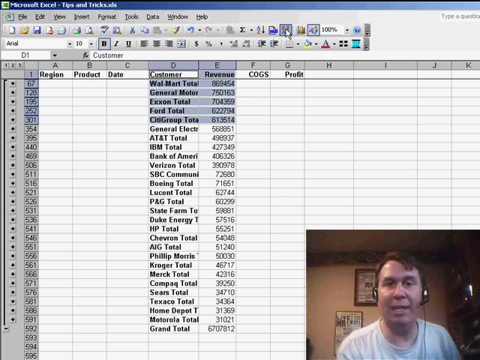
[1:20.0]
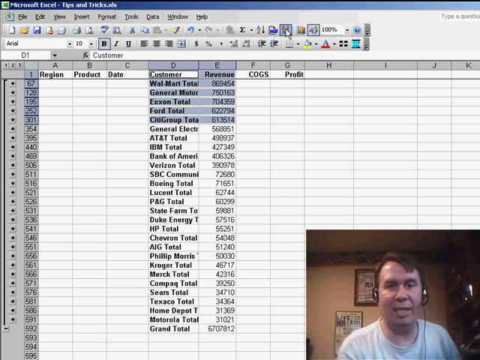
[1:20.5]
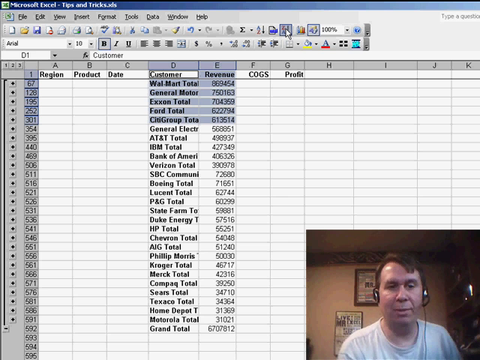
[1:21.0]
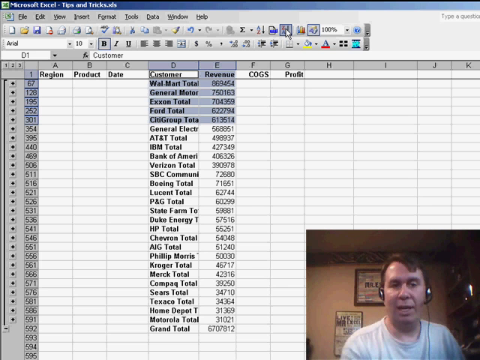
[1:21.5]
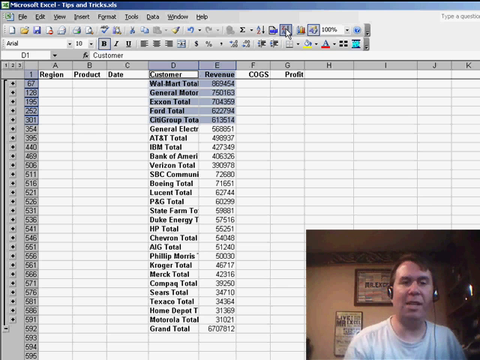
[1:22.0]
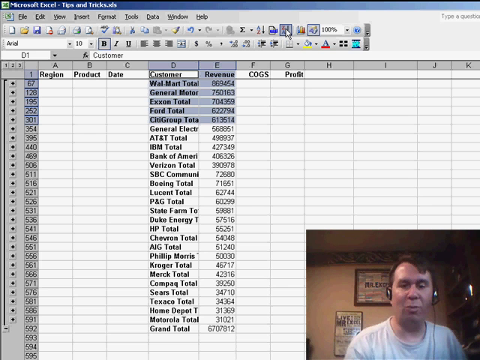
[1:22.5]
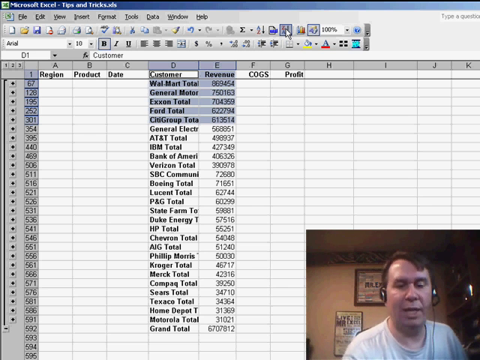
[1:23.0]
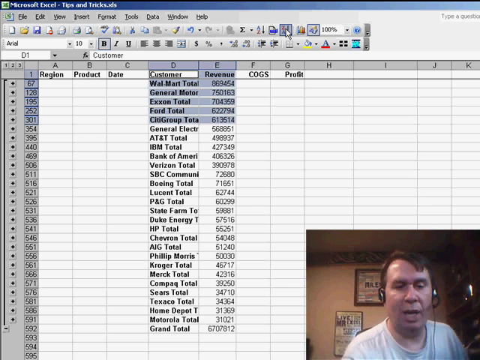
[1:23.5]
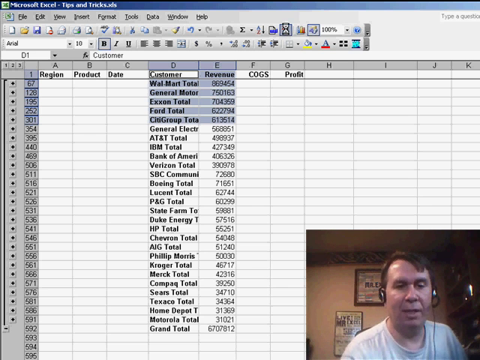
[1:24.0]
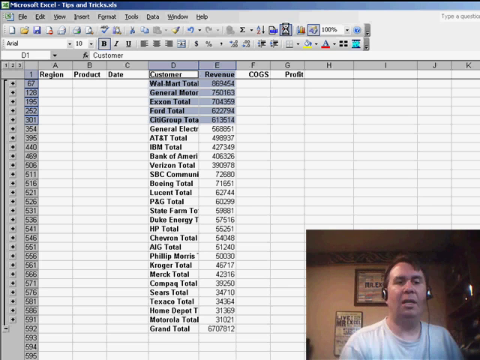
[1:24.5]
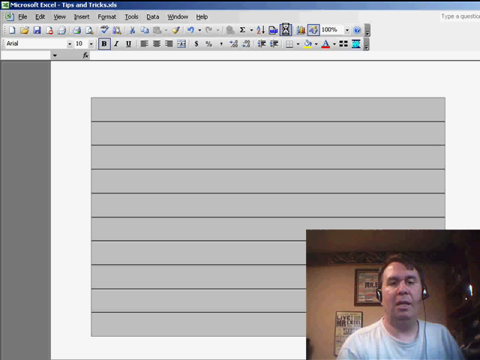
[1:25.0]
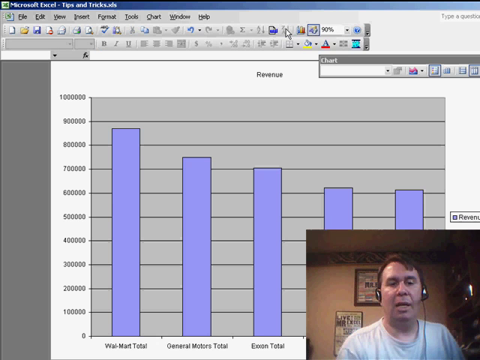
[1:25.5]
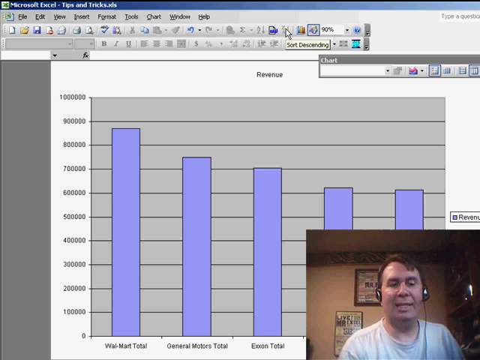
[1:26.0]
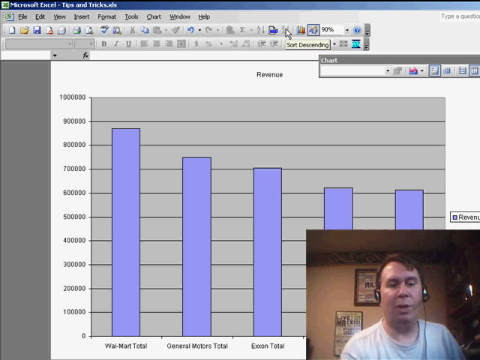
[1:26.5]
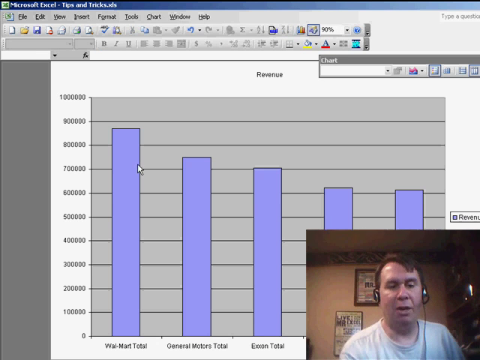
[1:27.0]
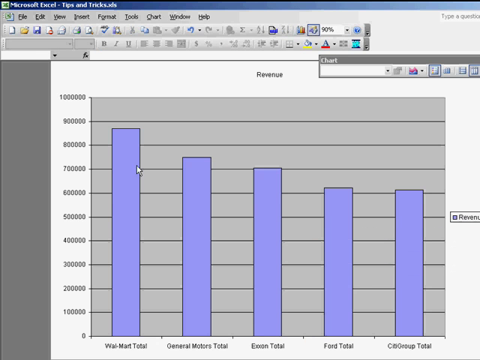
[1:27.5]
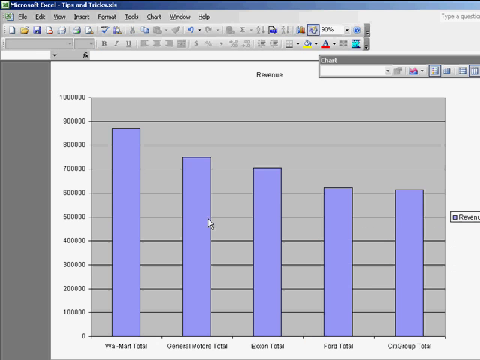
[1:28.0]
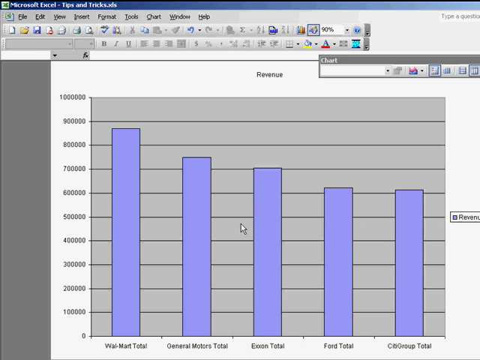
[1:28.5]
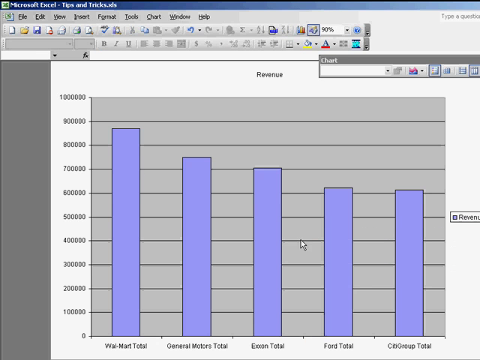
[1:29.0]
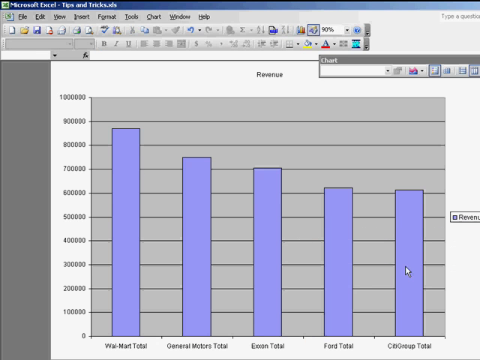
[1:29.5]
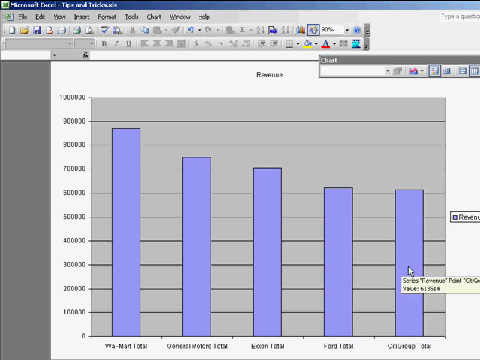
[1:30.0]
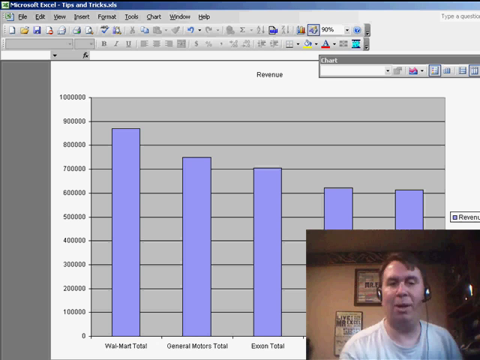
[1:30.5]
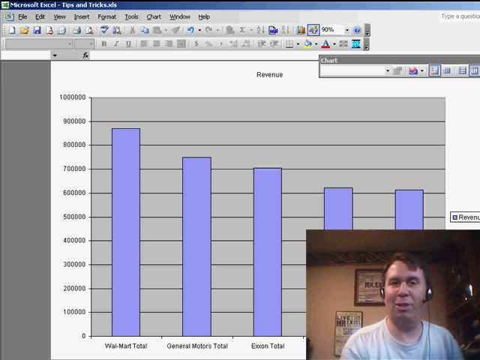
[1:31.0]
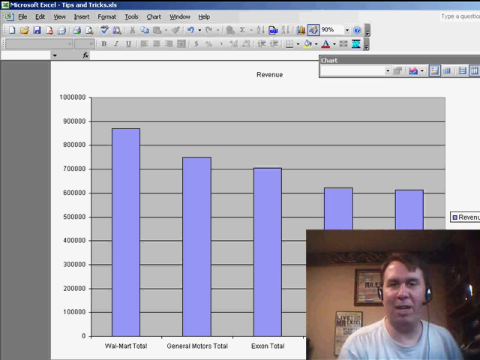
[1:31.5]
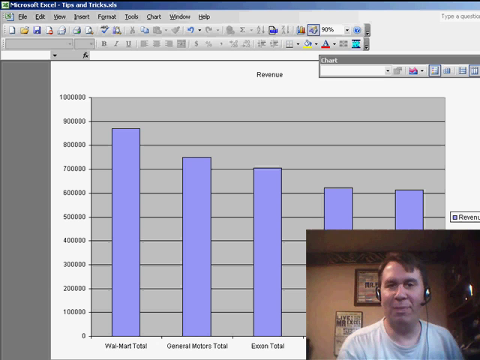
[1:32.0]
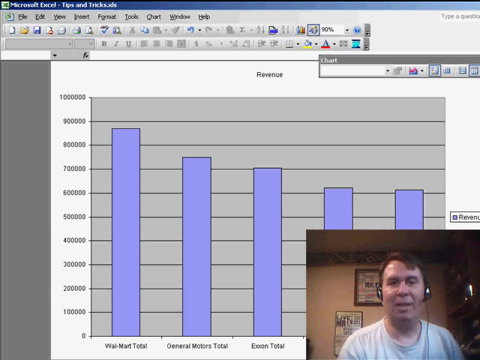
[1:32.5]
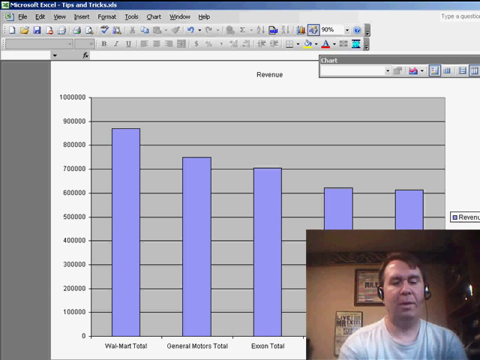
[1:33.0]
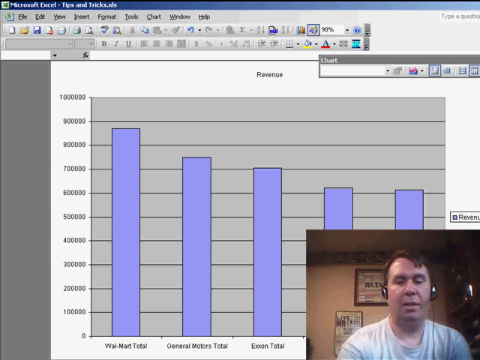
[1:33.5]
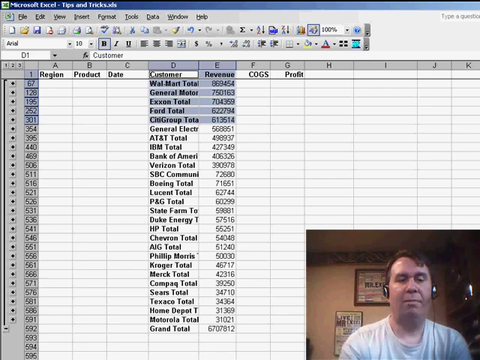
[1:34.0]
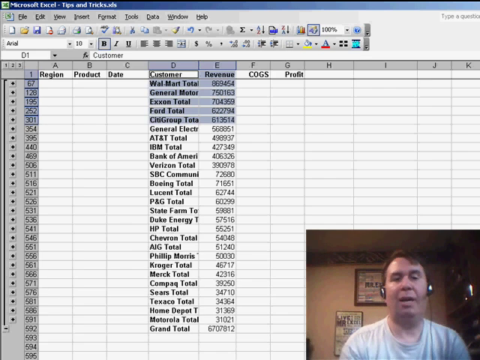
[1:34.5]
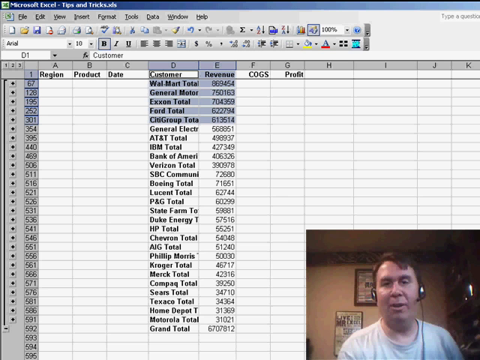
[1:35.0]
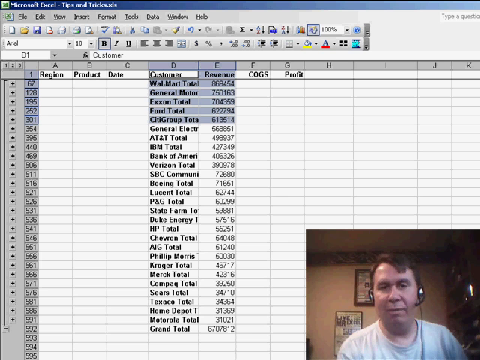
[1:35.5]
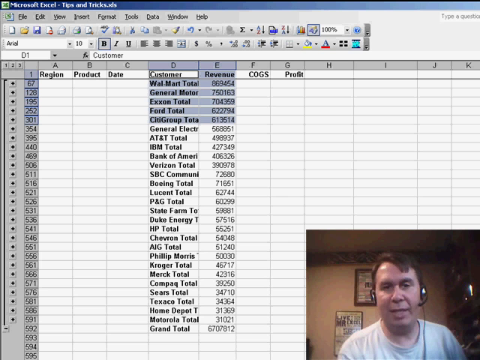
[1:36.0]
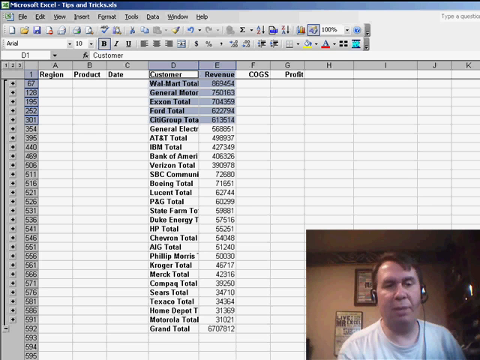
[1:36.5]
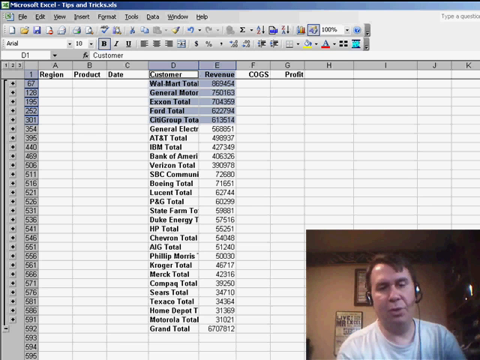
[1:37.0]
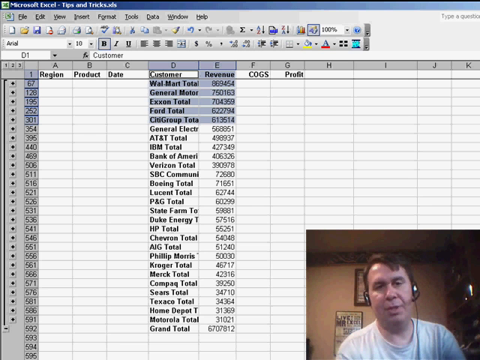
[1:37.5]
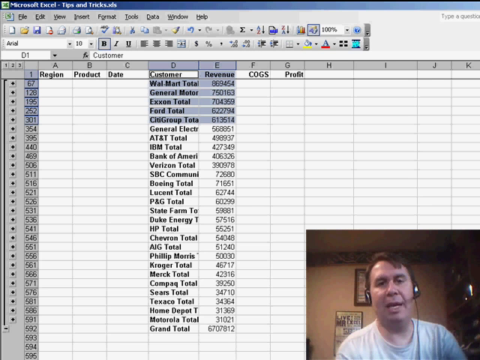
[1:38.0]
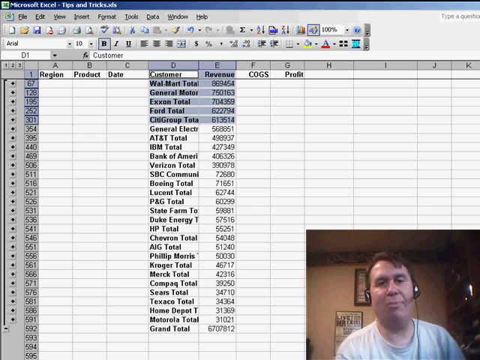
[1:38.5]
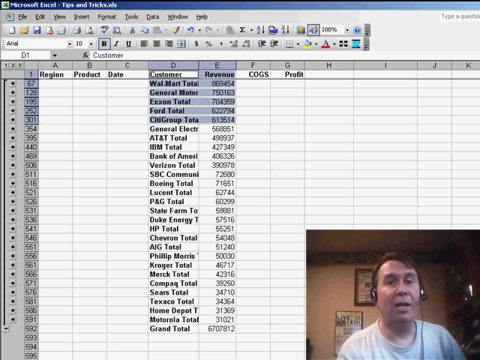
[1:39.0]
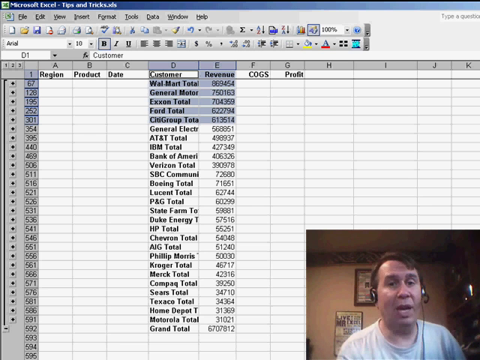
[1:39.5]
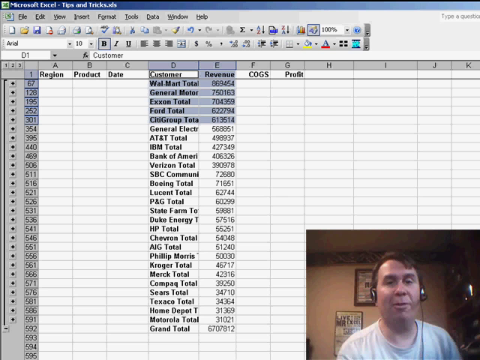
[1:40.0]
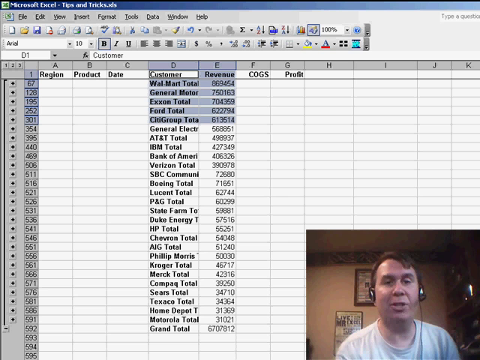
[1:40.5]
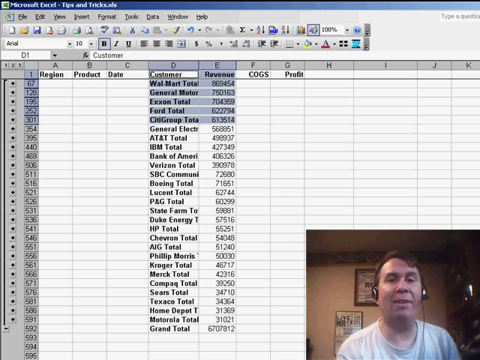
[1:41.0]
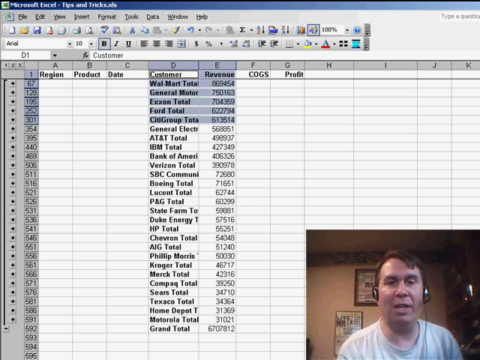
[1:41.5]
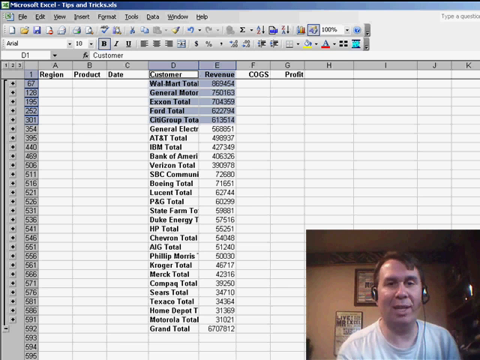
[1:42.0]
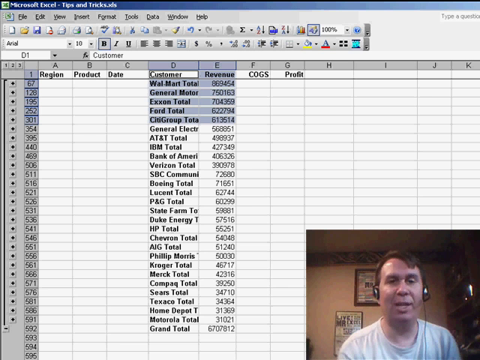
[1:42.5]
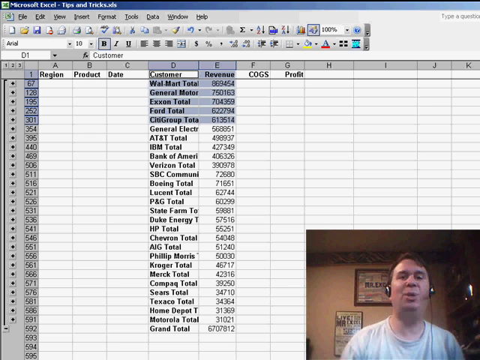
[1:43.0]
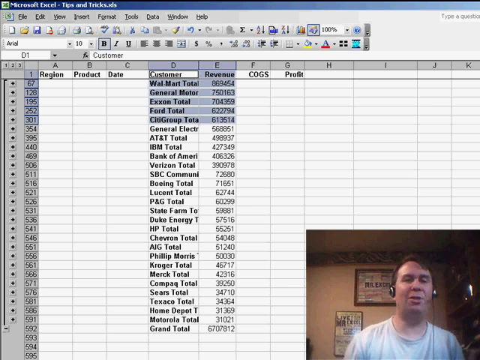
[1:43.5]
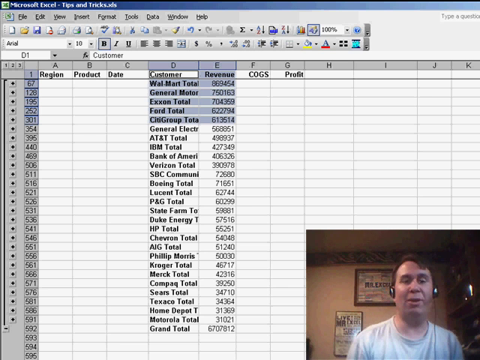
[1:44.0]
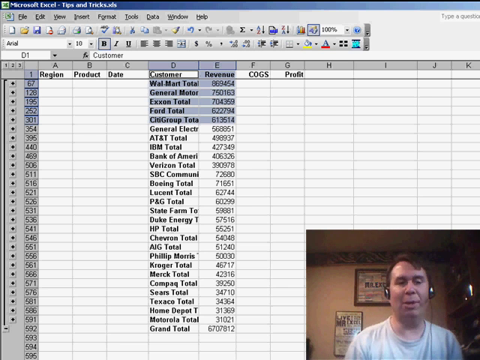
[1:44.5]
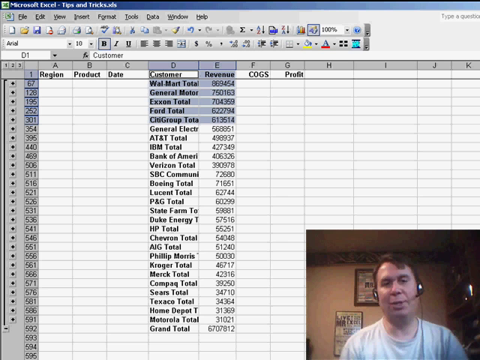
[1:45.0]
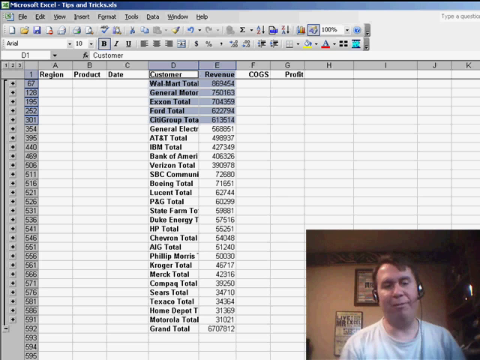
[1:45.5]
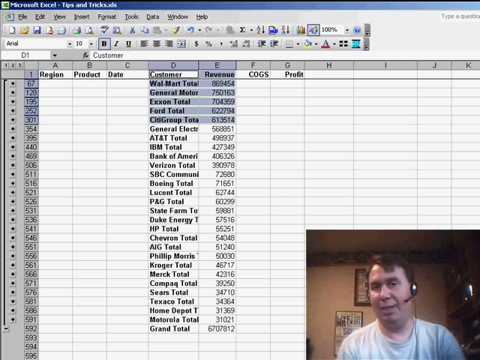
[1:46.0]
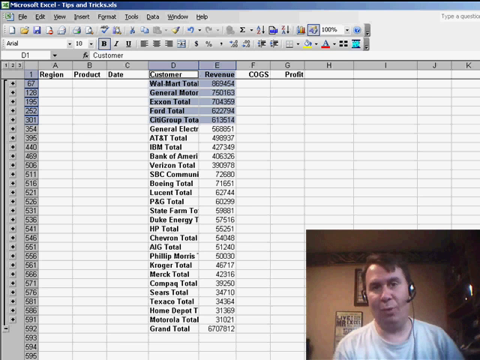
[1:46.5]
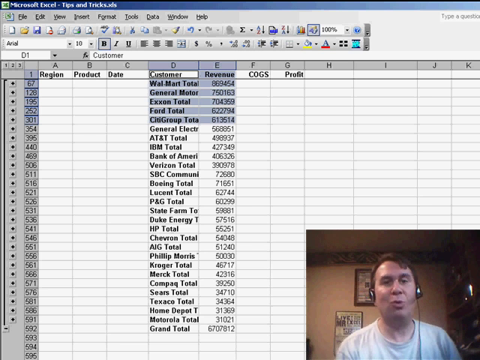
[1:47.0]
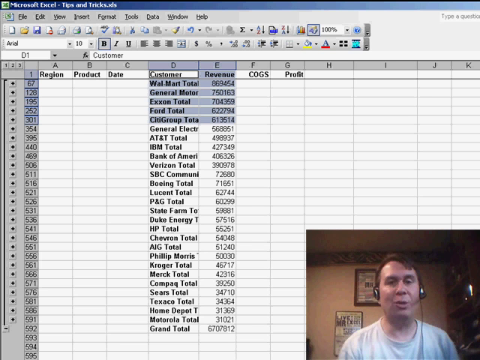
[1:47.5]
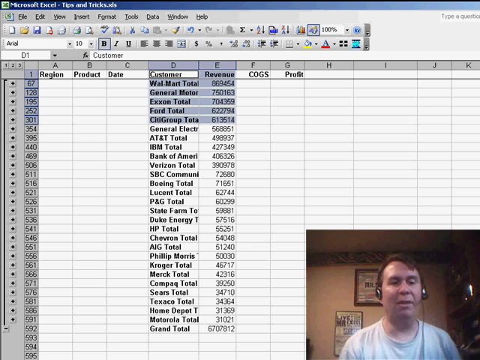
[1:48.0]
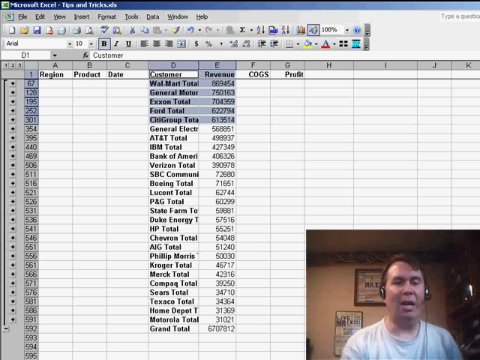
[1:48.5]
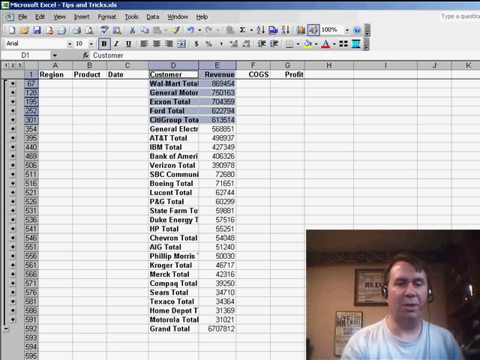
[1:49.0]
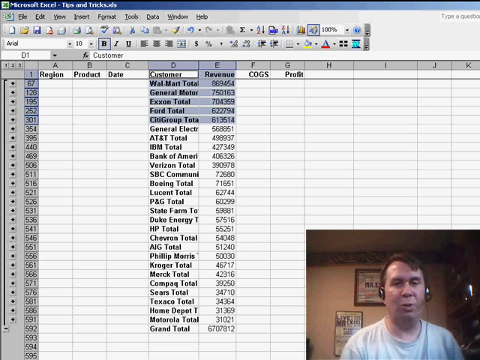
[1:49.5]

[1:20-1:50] The top five rows of the table, in both the customer and revenue columns, are highlighted with a blue background instead of white. An unidentified button in the top menu is clicked, generating a graph of revenue with five thick blue bars, one for each of the highlighted customers, including Walmart and General Motors. The podcaster continues to talk to the camera and looks quite friendly. His webcam box disappears for a while to show the graph in full, including both the x- and y-axis and all the bars; when the window pops up again, it obscures the last two bars. He then goes back to the main screen showing the five highlighted rows at the top.